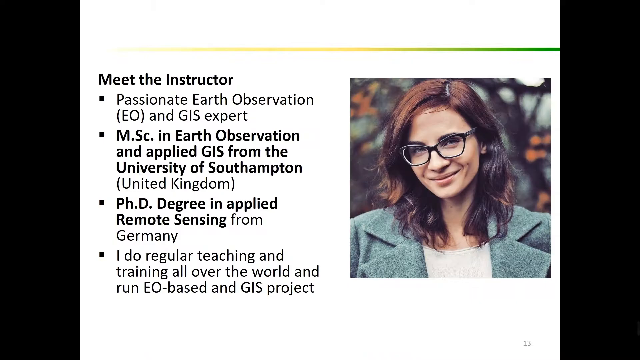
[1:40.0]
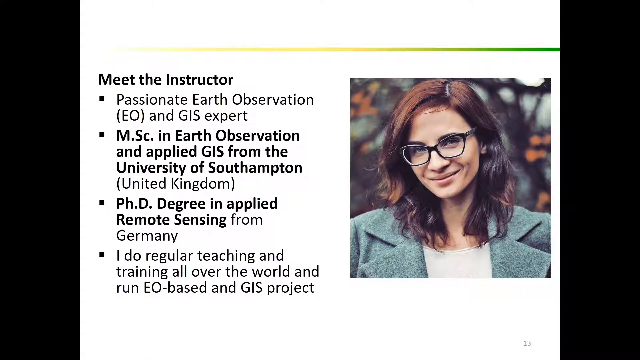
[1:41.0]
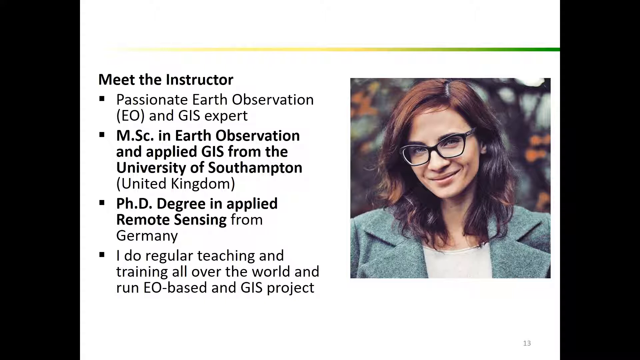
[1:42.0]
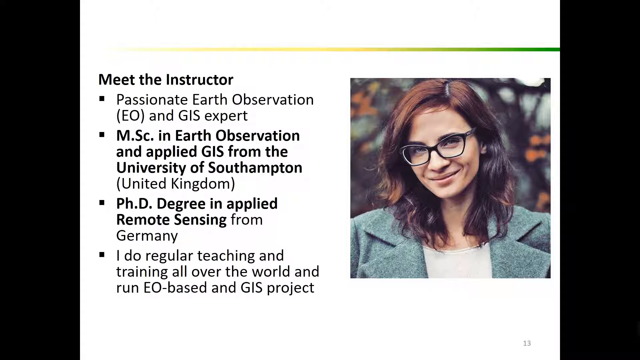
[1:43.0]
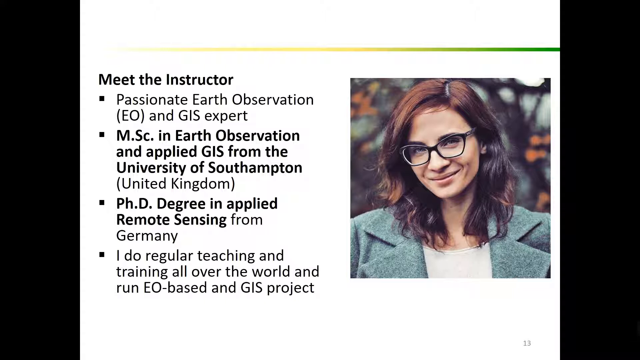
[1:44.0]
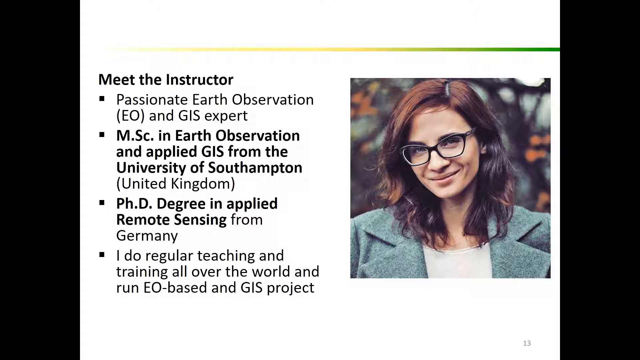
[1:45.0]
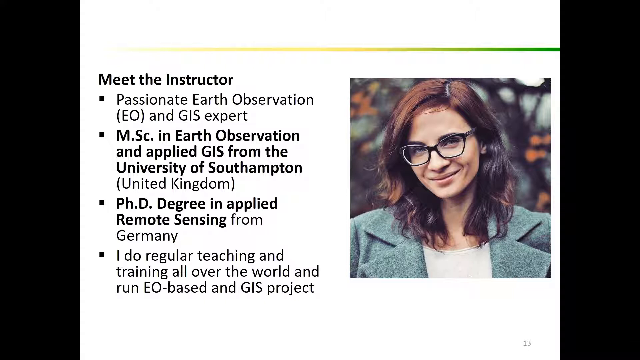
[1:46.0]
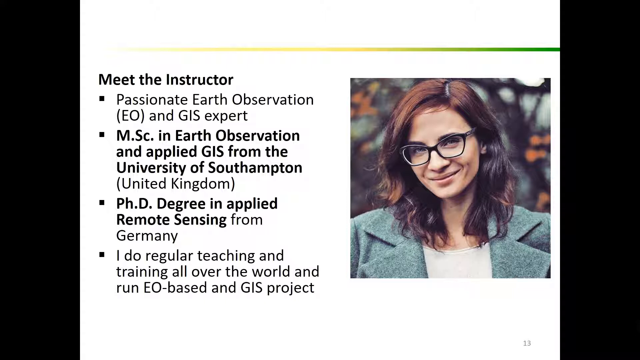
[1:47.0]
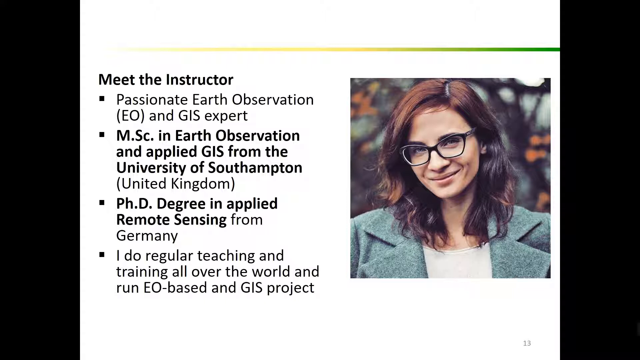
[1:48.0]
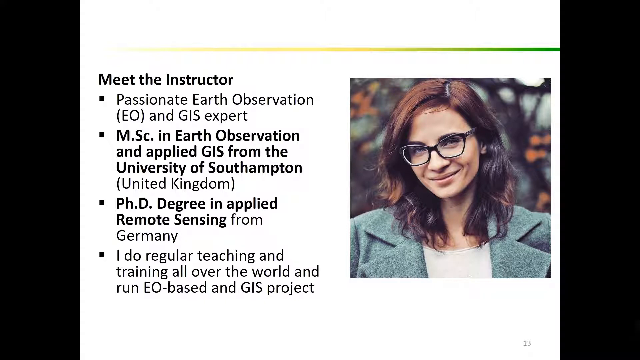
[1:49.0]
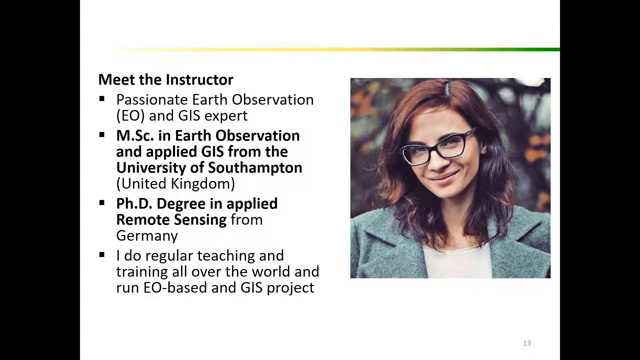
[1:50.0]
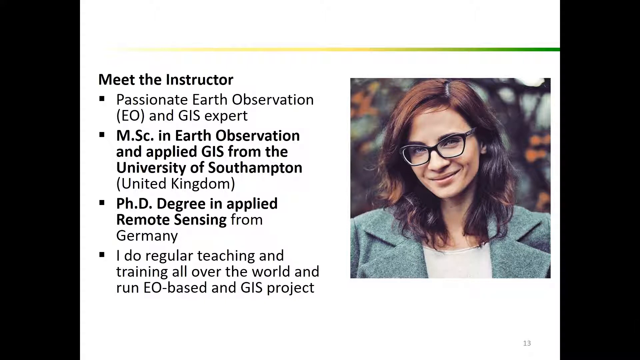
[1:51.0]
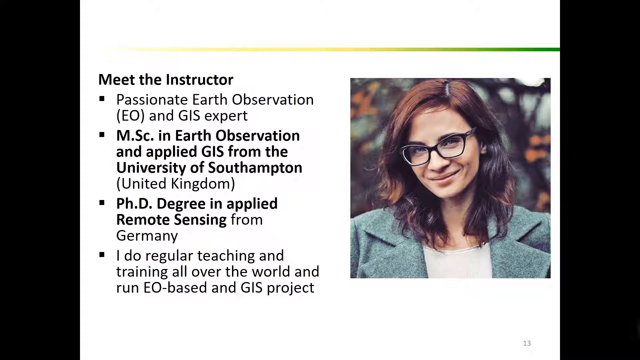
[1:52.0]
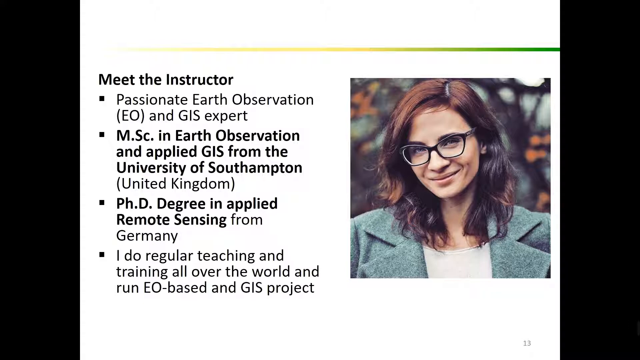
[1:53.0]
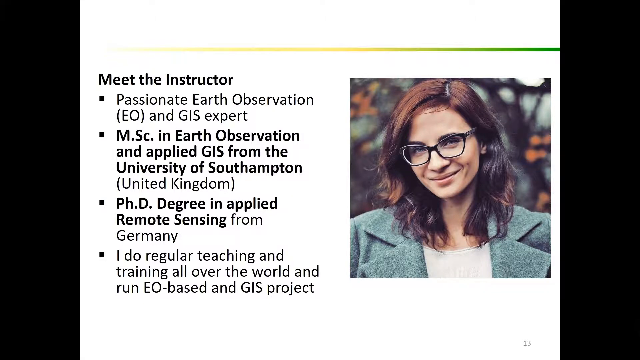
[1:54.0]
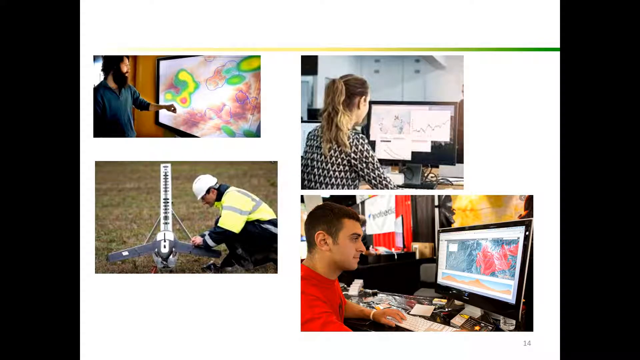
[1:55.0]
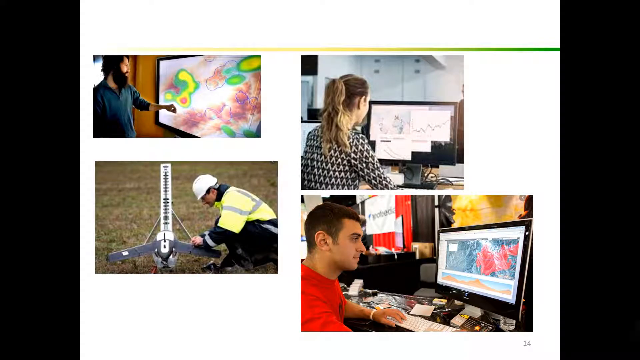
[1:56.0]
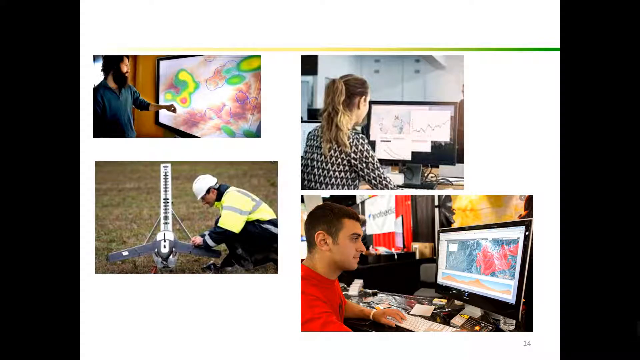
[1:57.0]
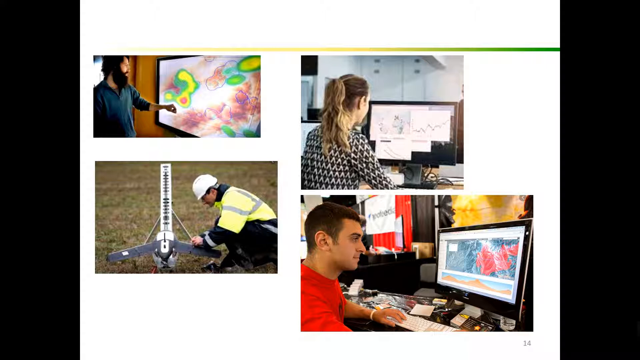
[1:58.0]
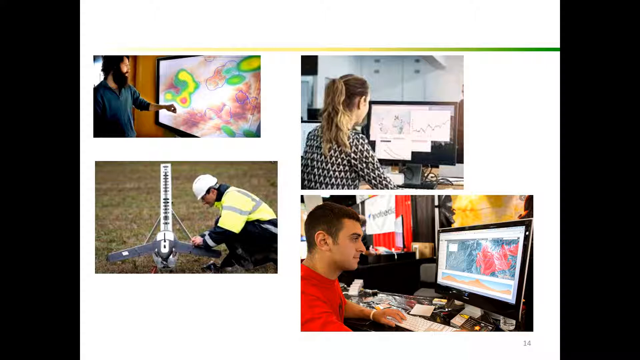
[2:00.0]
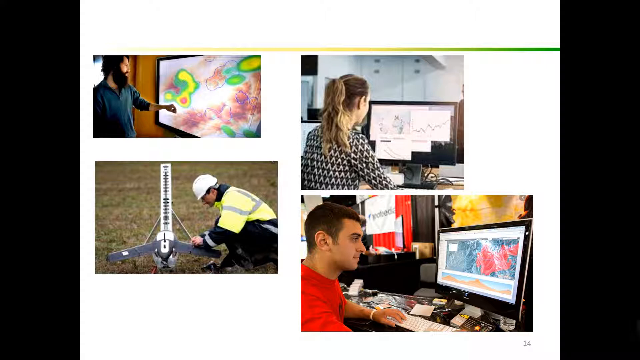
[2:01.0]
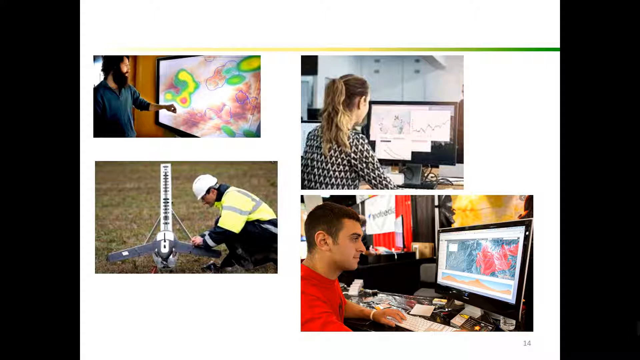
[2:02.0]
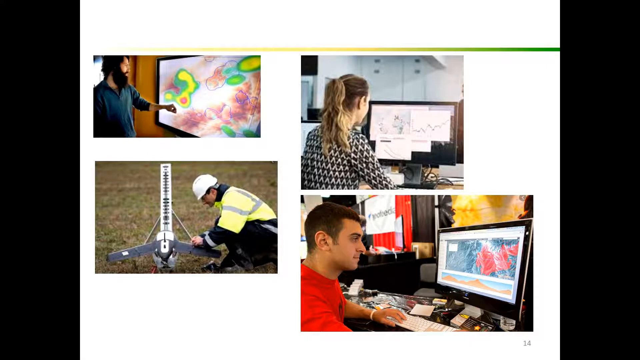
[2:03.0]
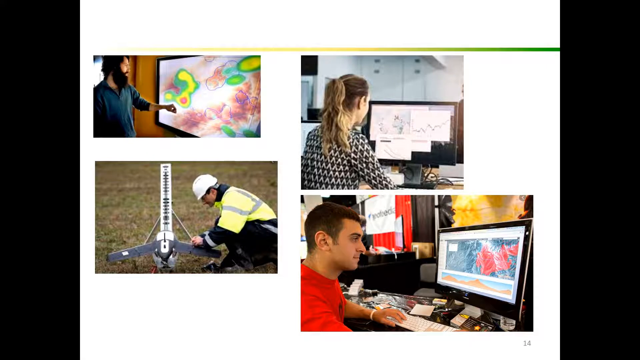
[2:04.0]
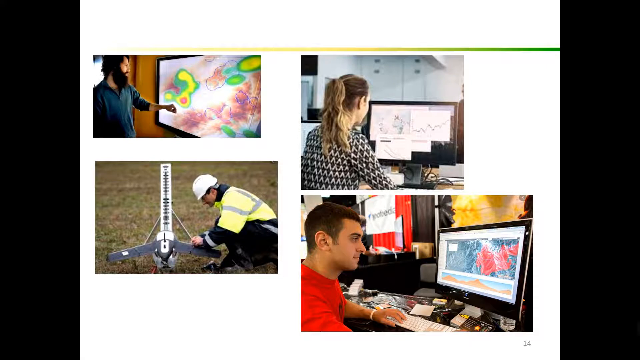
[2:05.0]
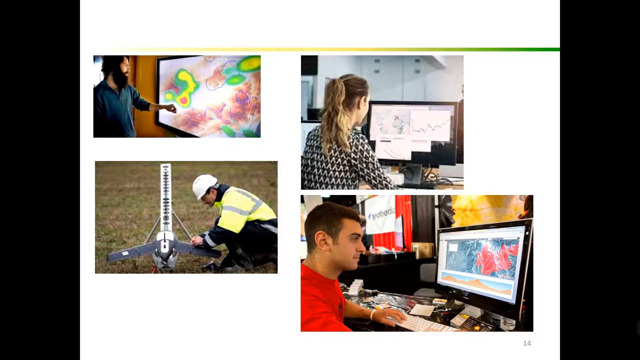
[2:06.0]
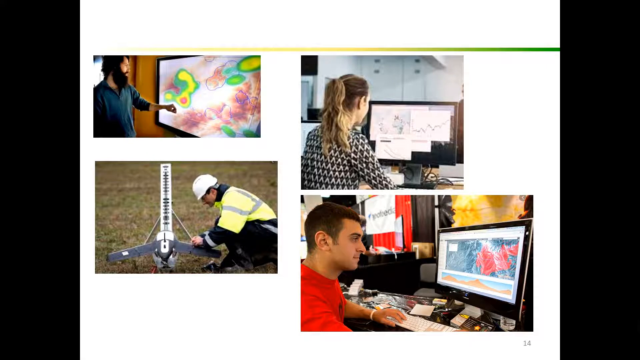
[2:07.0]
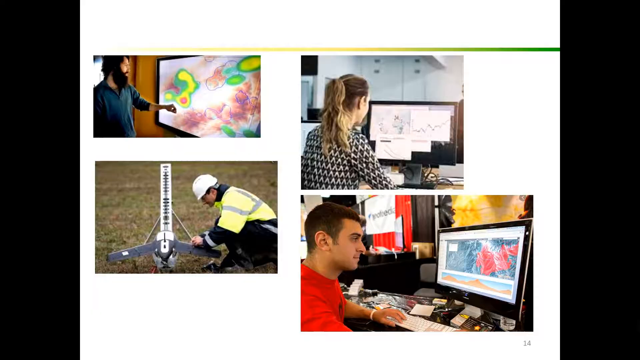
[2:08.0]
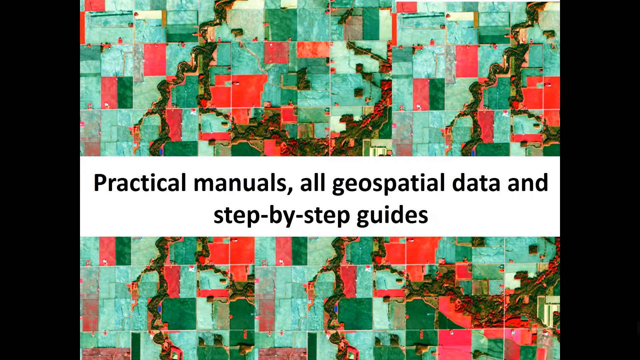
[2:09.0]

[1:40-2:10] The video starts with the image of the instructor and information about her, mentioning a Ph.D. degree and remote sensing. Four images are then shown, apparently of tools this type of work needs: computers and what looks like a drone of some sort. The video goes back to the overhead aerial view of a landmass with parcels of land in different colors, presumably filtered through the software, along with practical manuals, all geospatial data, and step-by-step guides.